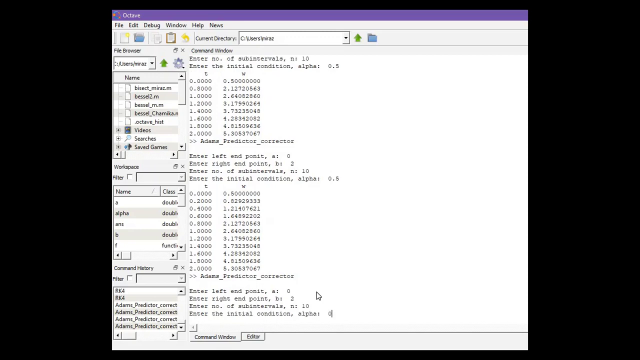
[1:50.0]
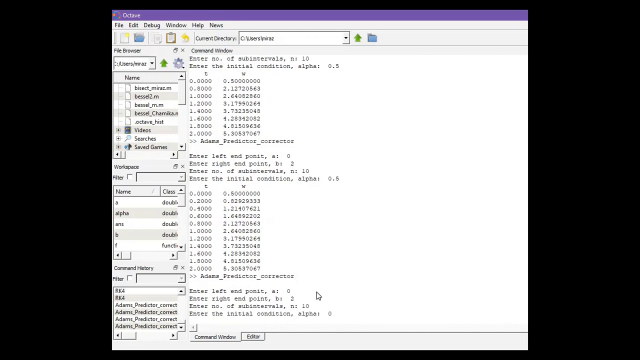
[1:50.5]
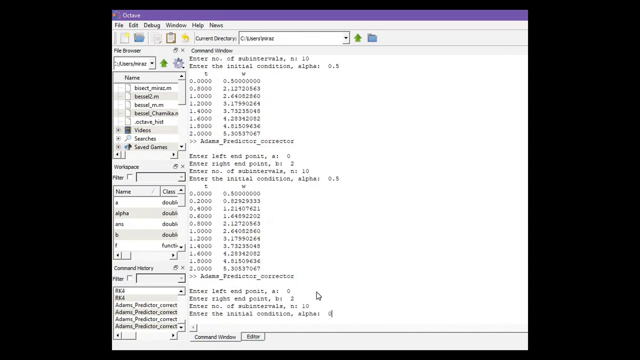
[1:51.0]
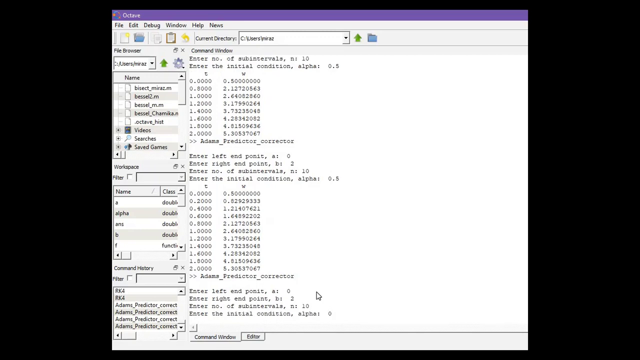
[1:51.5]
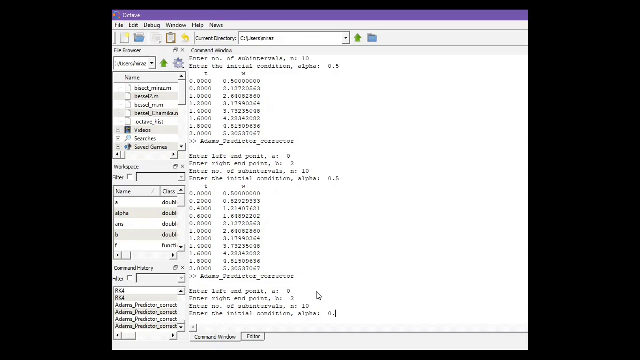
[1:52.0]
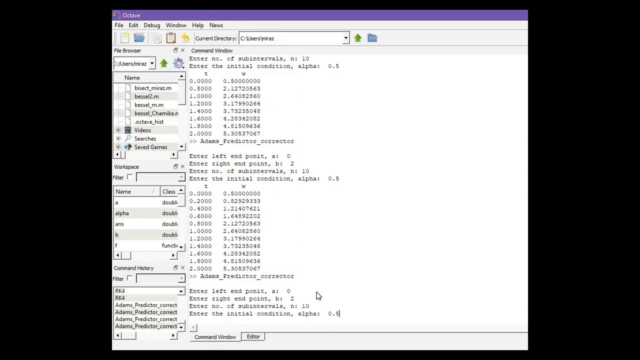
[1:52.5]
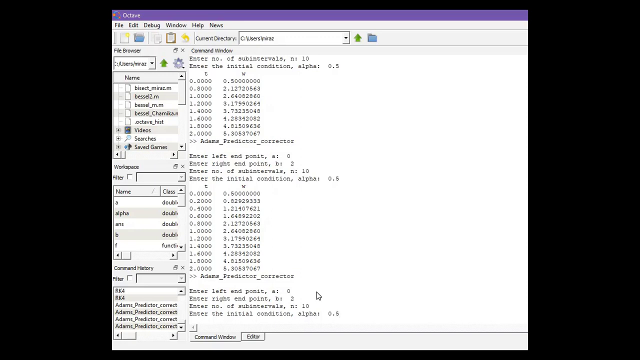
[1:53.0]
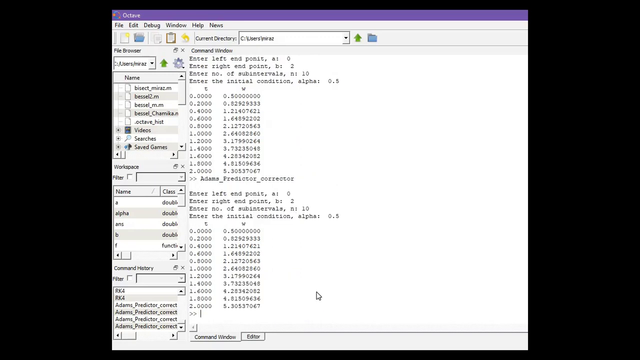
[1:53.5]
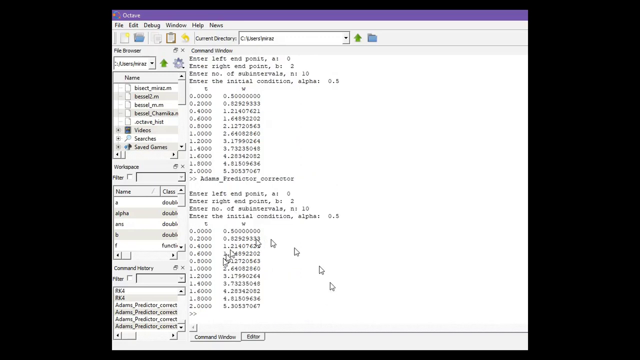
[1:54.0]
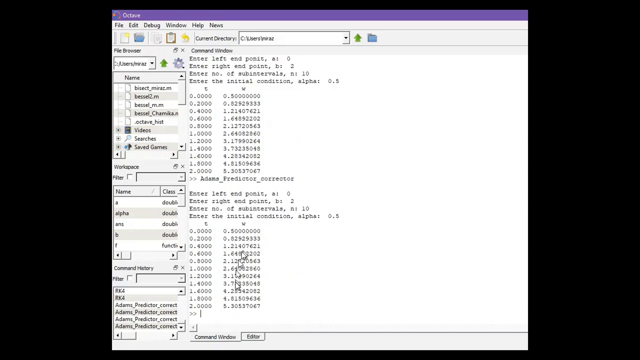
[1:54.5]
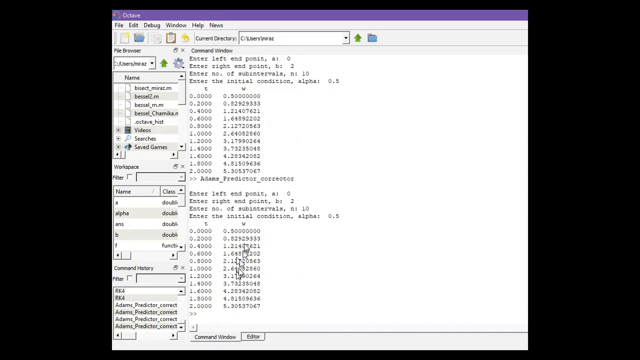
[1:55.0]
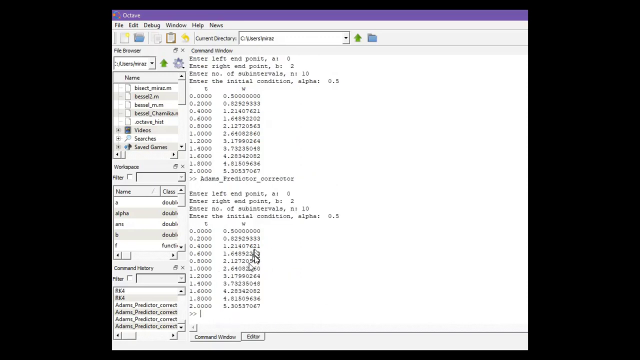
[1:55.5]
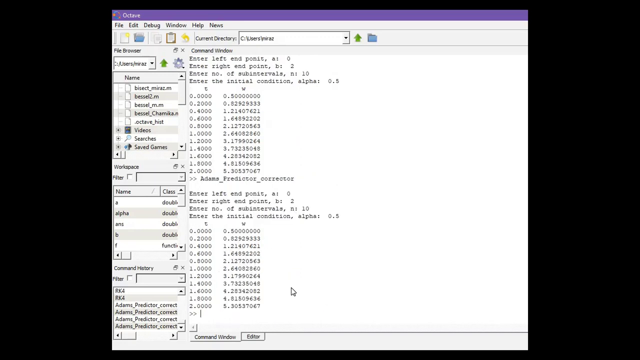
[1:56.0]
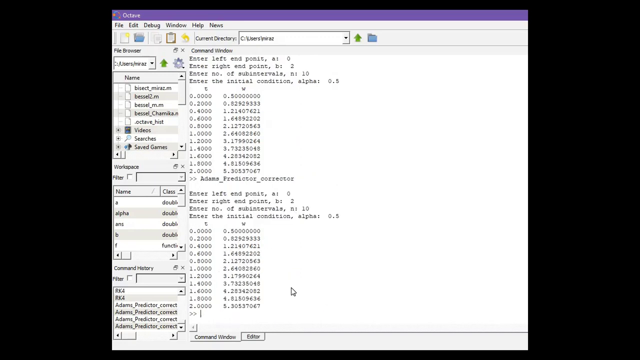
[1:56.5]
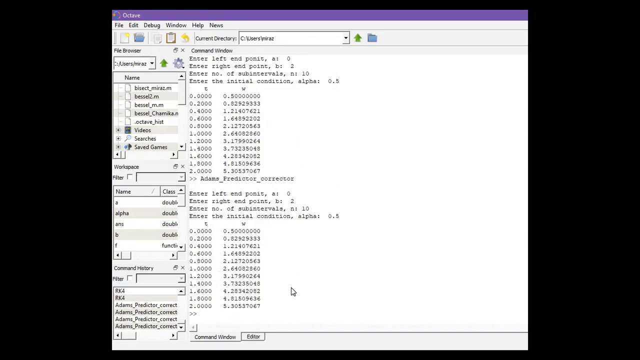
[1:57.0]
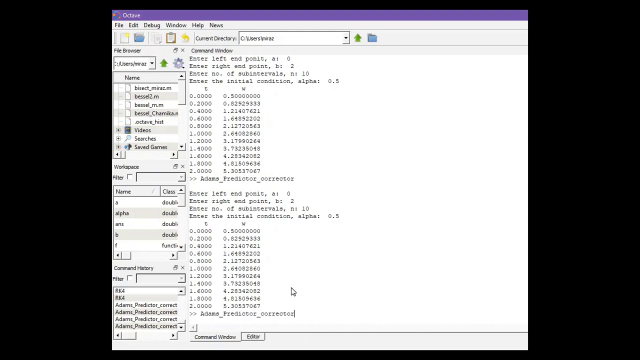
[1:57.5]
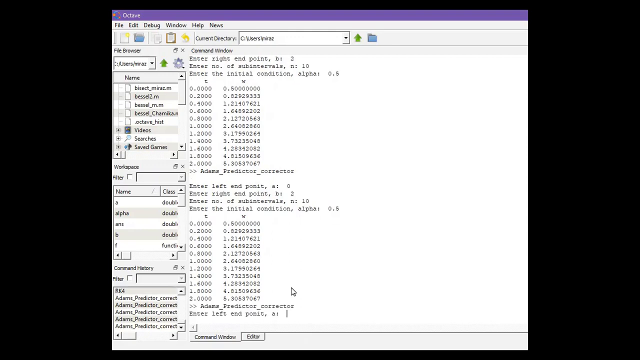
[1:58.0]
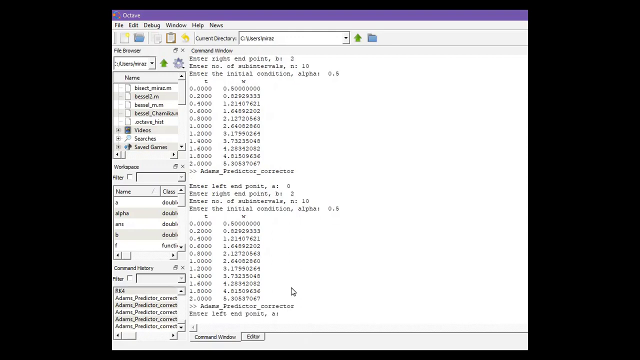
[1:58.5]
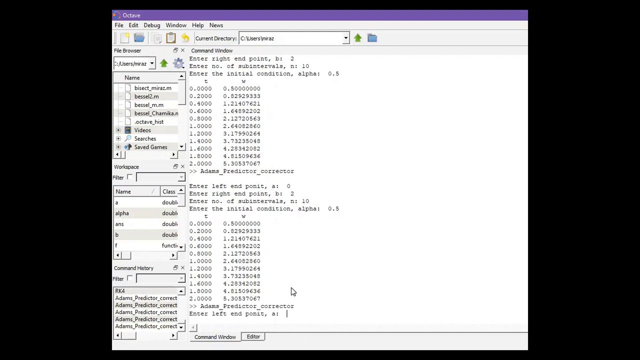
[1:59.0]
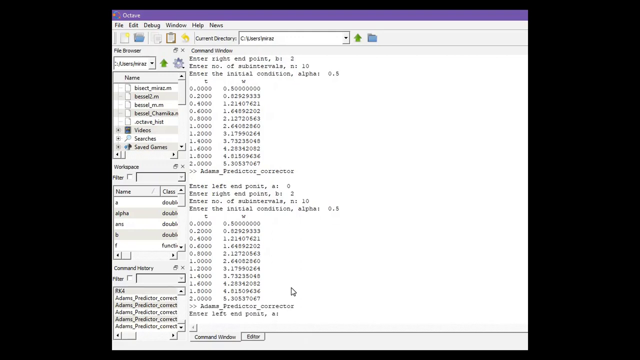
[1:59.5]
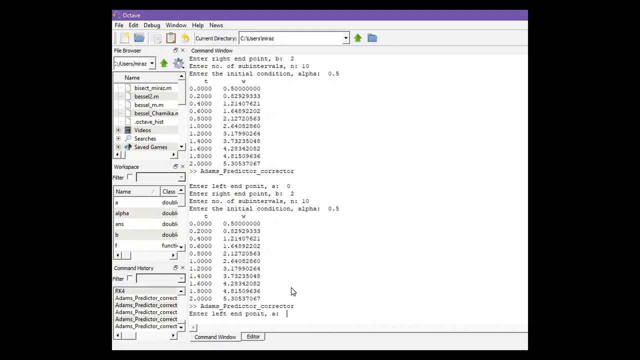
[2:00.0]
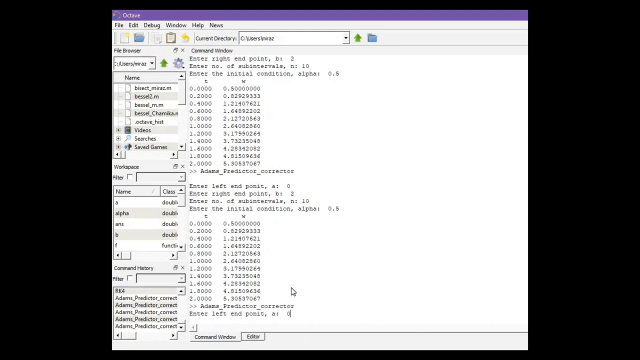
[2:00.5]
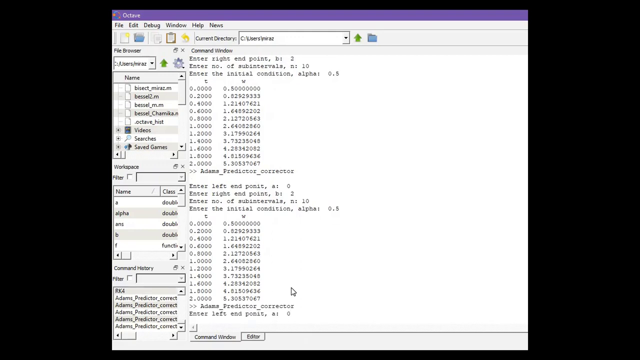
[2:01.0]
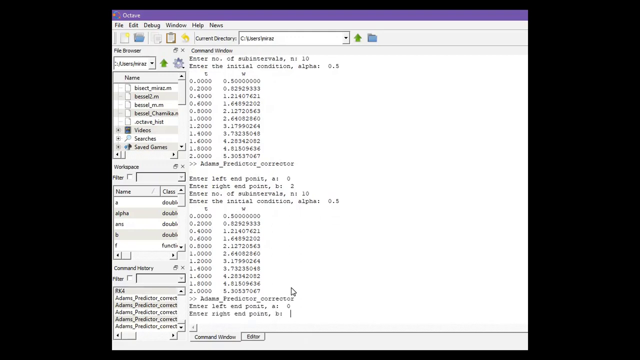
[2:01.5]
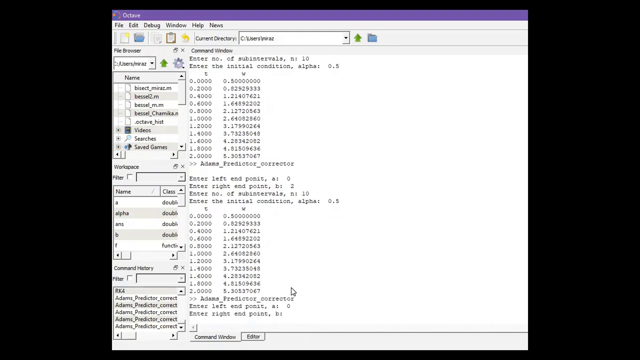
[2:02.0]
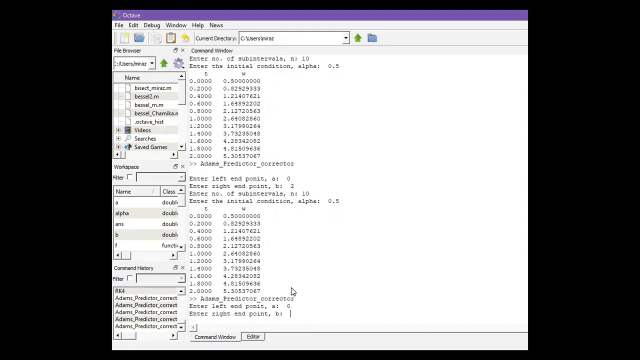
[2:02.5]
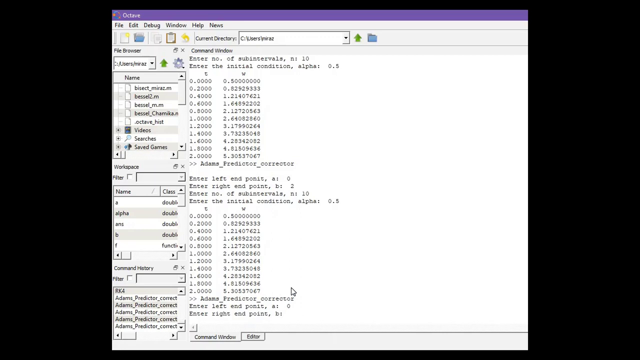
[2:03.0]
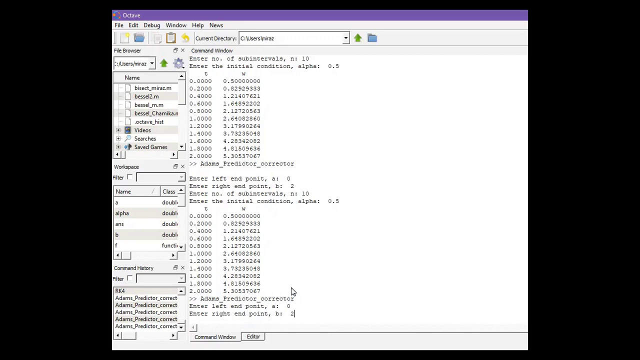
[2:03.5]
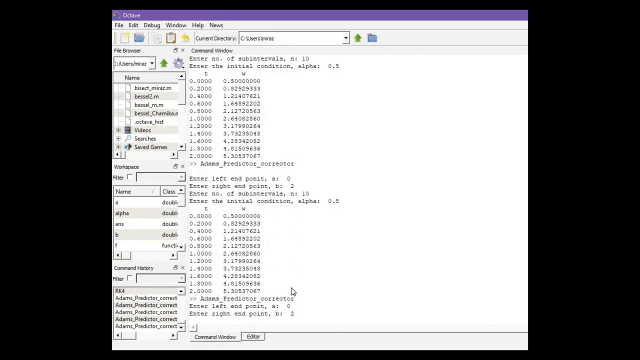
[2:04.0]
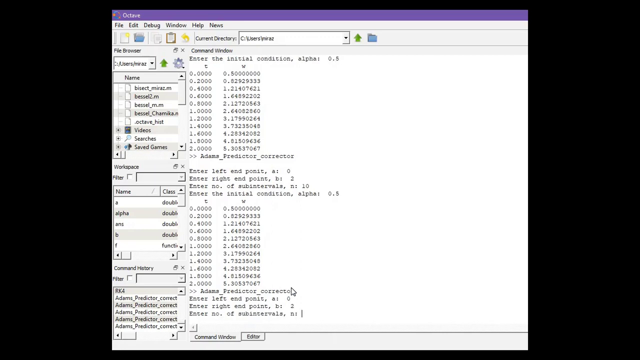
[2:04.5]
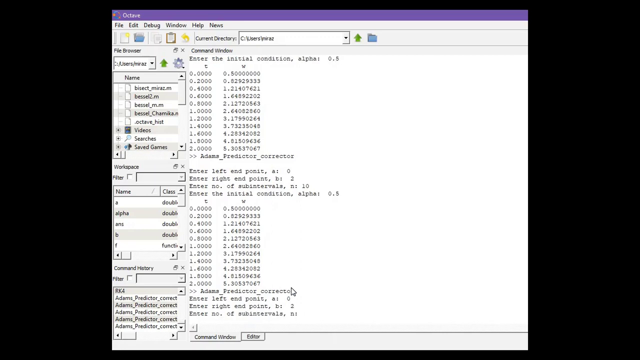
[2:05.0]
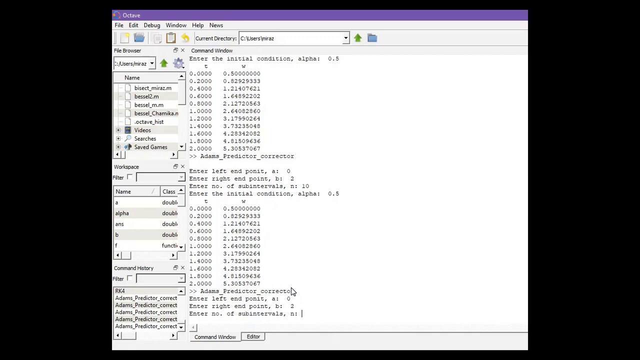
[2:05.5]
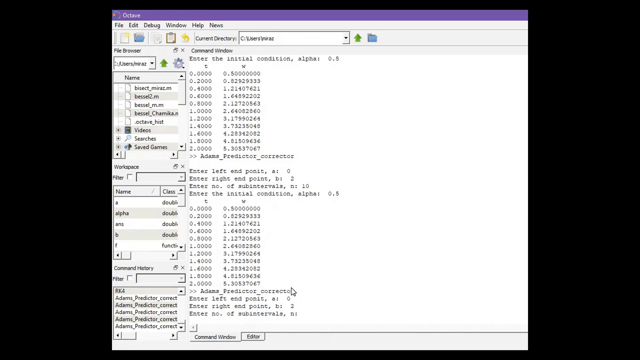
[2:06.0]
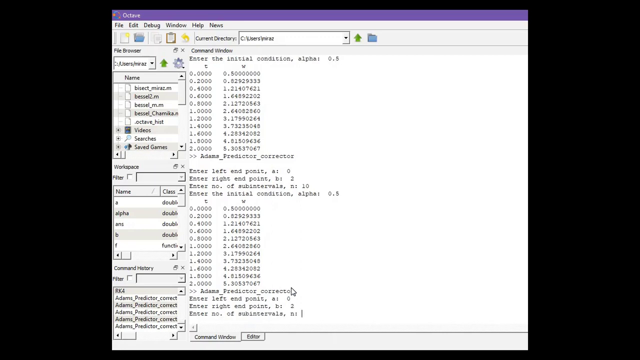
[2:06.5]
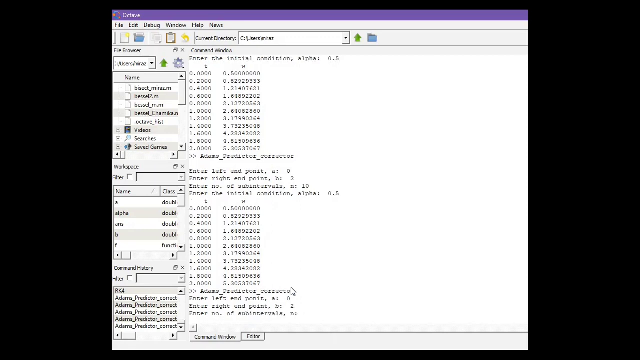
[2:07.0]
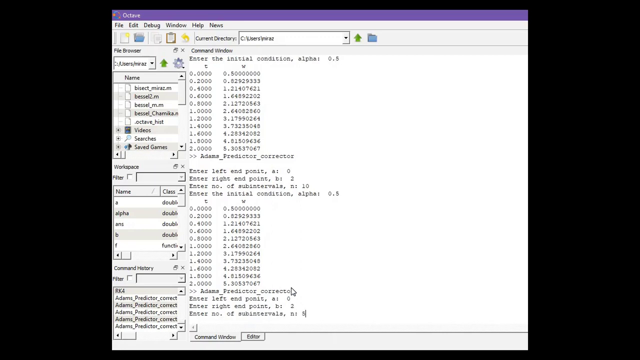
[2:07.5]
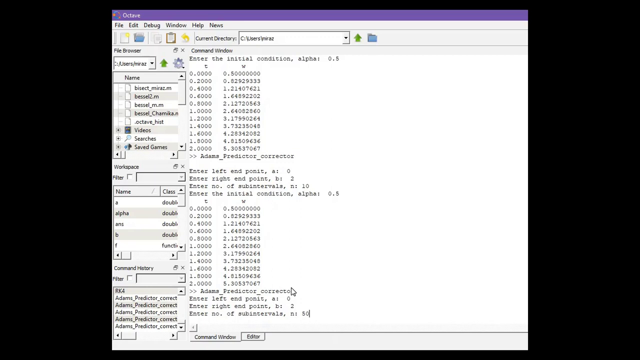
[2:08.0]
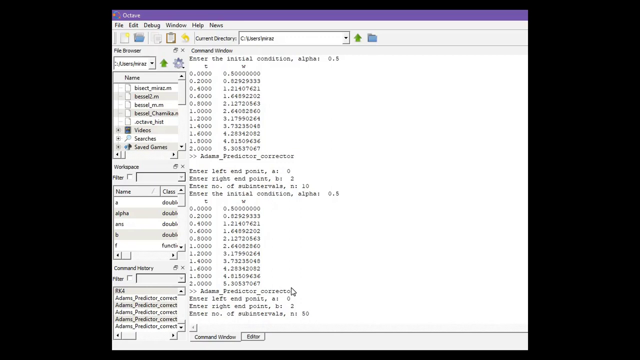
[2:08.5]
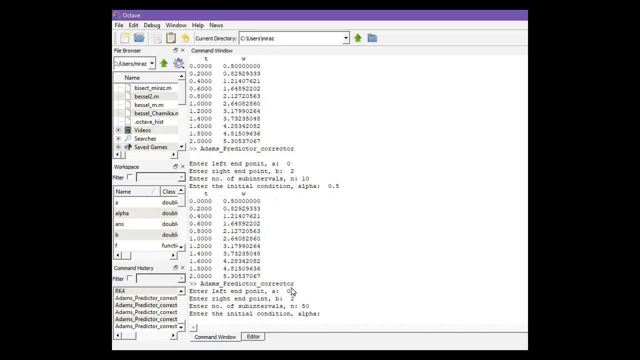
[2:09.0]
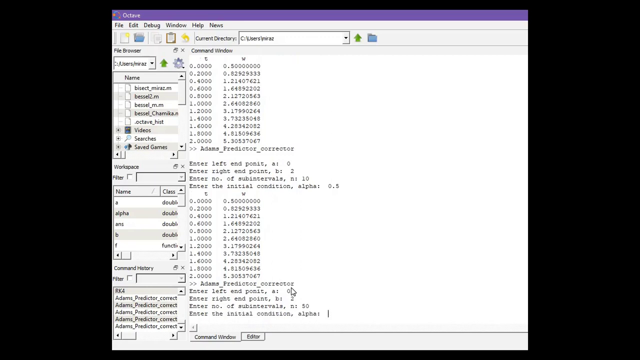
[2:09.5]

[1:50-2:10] A document with lines of mathematical code is open. At the very top of the command window it says "enter number of sub intervals" and "enter the initial condition alpha." The mouse pointer leaves a trail behind it as it moves around, making it easier to see. At the bottom of the screen the cursor is flashing as the person types different lines, including "enter left endpoint," "enter right endpoint," "enter number of sub intervals," and "enter the initial condition alpha."